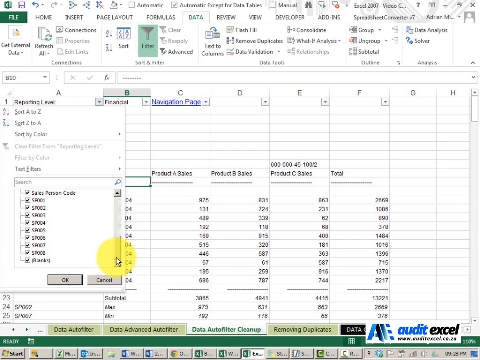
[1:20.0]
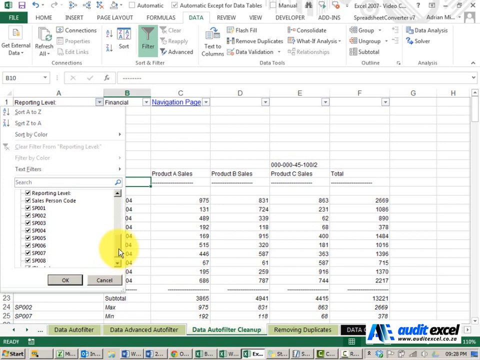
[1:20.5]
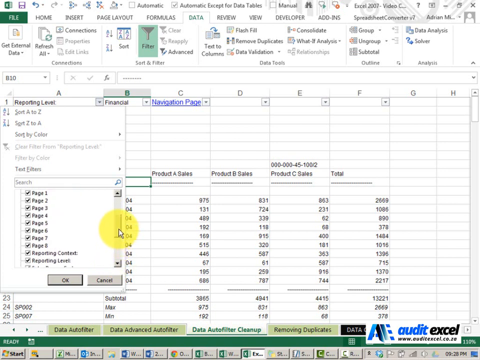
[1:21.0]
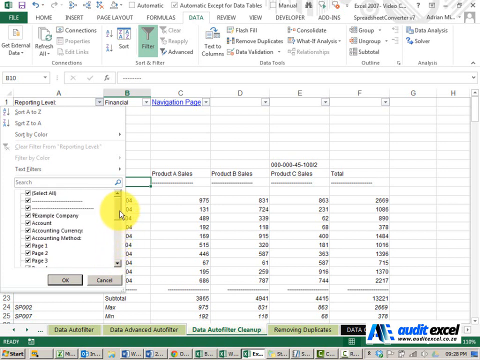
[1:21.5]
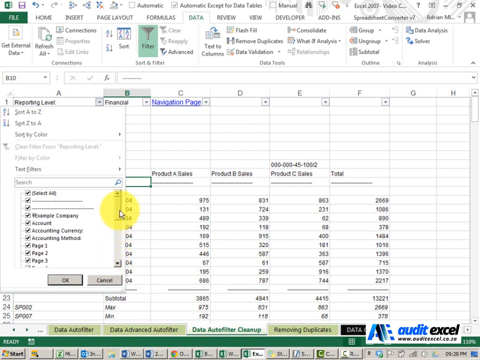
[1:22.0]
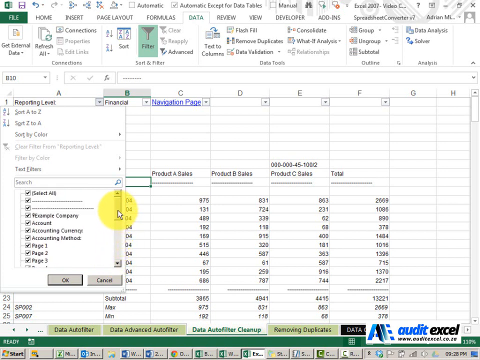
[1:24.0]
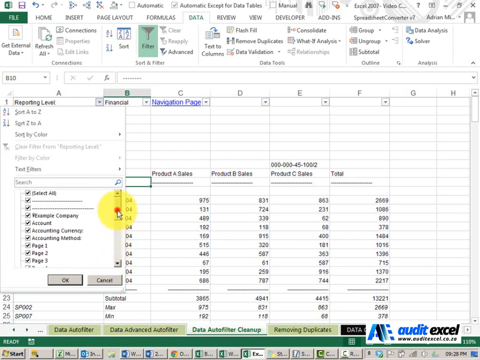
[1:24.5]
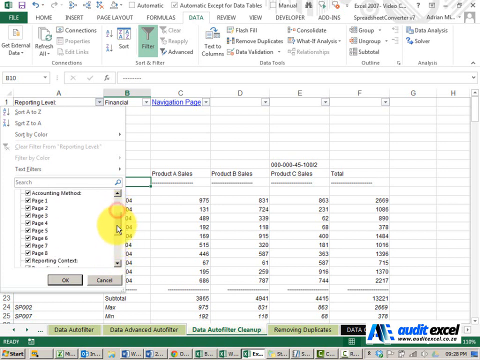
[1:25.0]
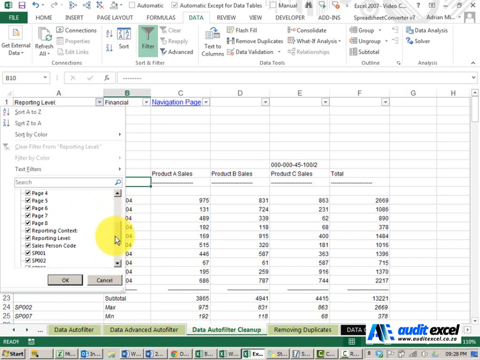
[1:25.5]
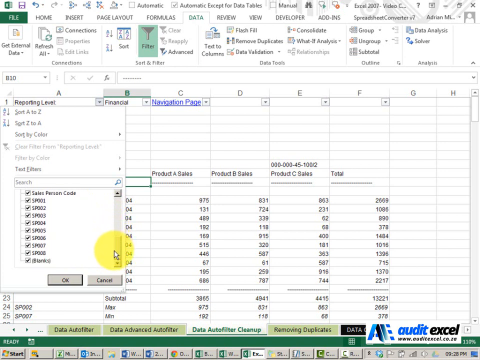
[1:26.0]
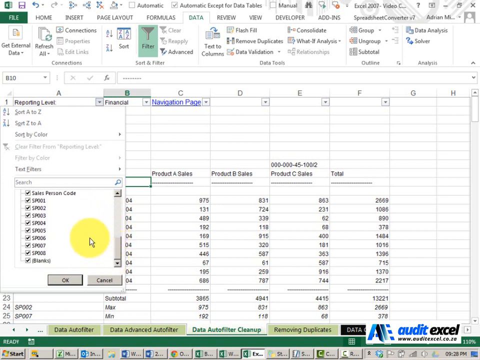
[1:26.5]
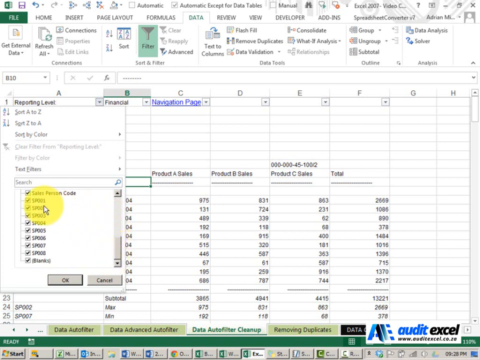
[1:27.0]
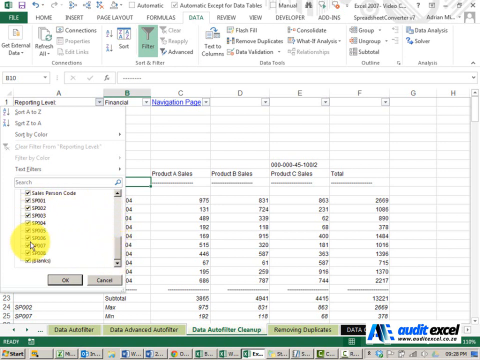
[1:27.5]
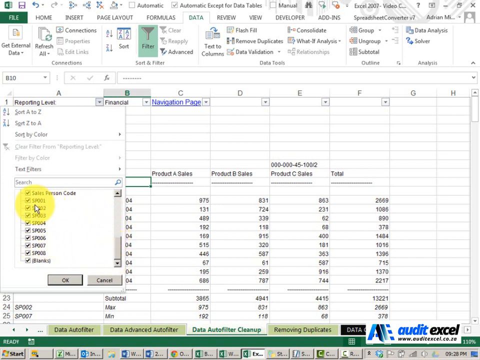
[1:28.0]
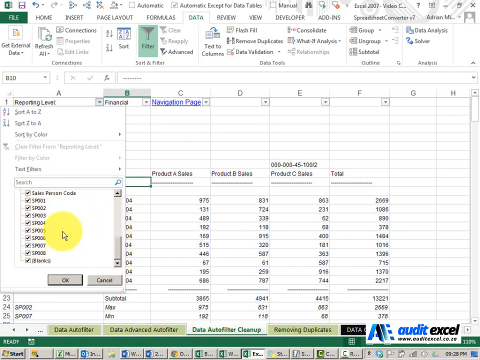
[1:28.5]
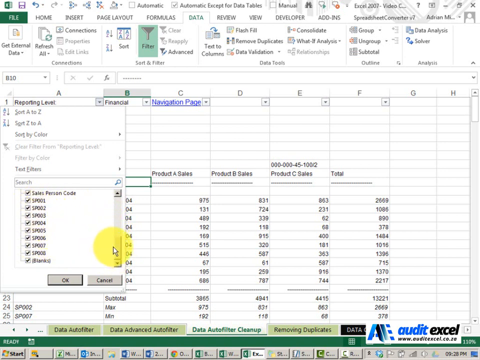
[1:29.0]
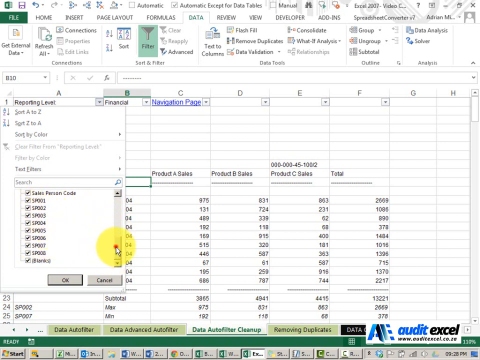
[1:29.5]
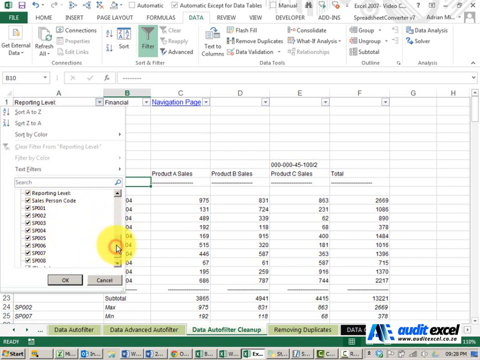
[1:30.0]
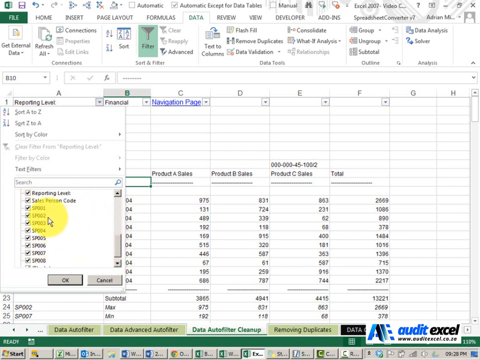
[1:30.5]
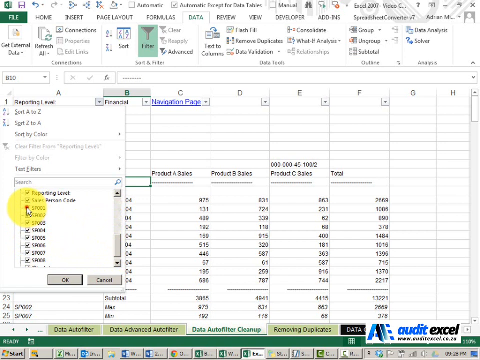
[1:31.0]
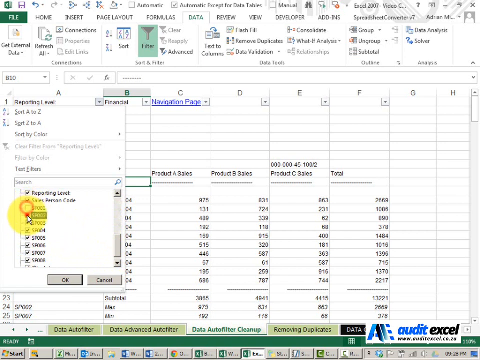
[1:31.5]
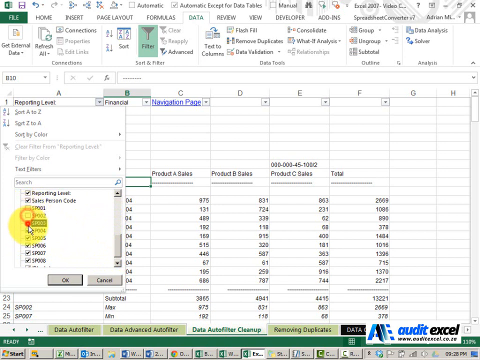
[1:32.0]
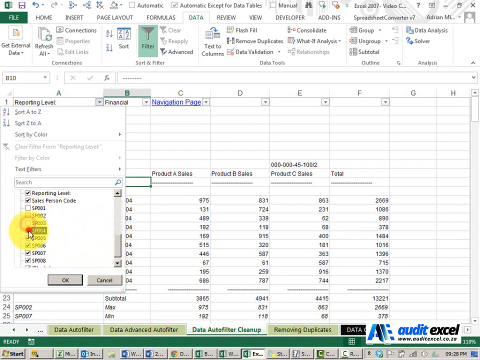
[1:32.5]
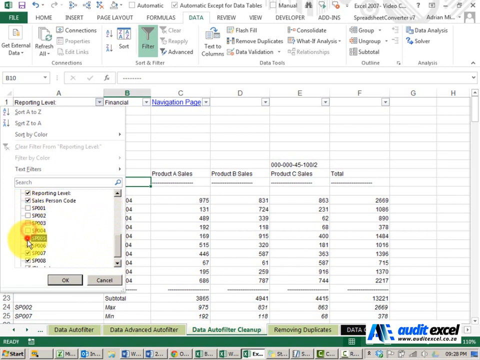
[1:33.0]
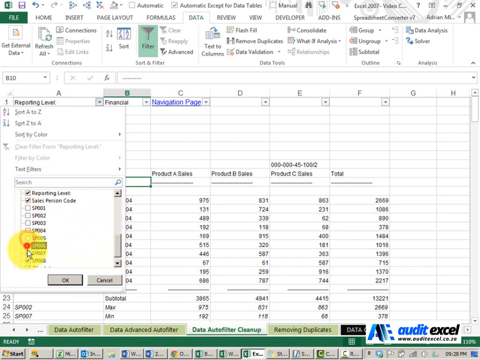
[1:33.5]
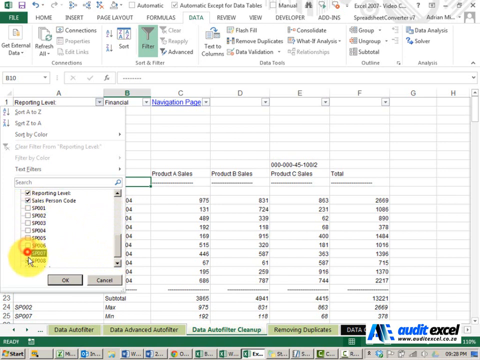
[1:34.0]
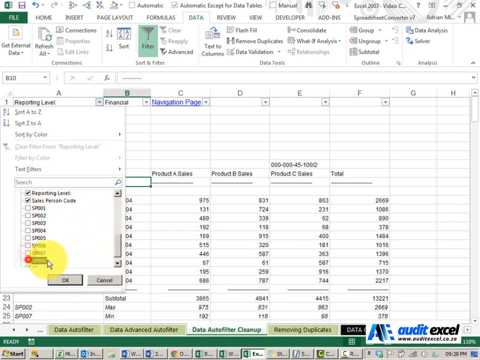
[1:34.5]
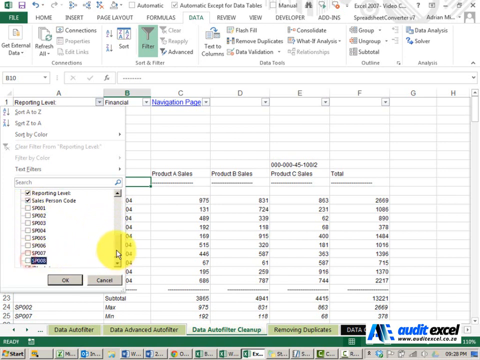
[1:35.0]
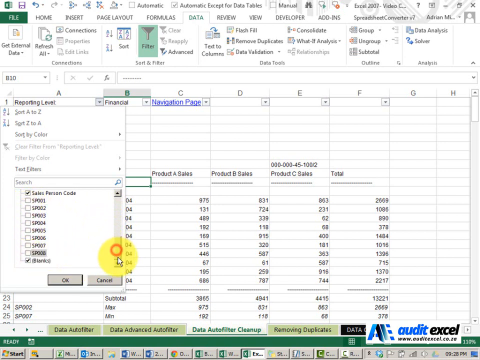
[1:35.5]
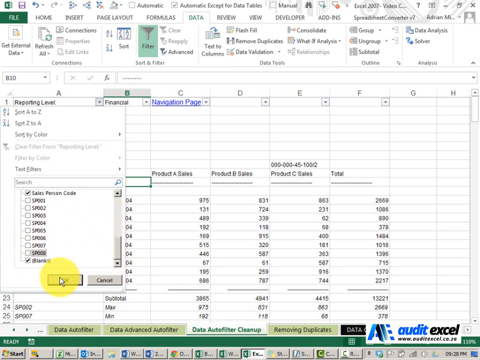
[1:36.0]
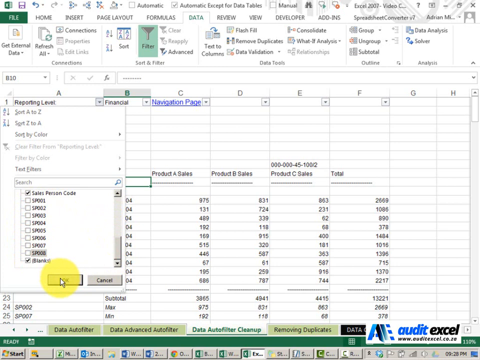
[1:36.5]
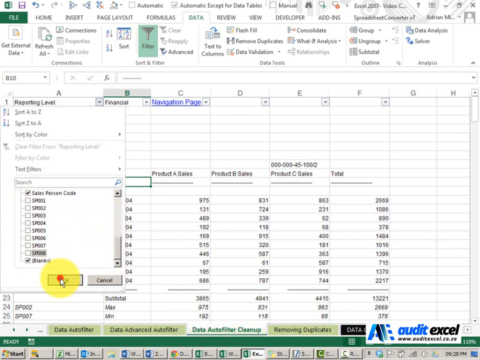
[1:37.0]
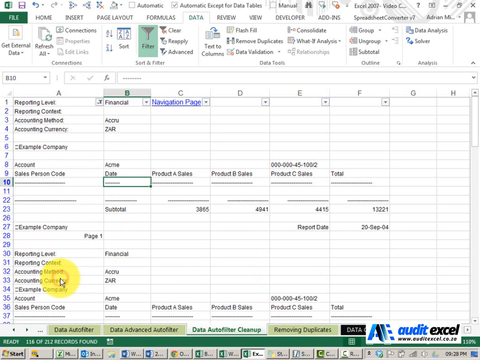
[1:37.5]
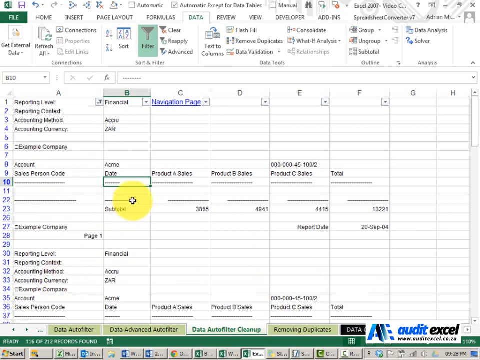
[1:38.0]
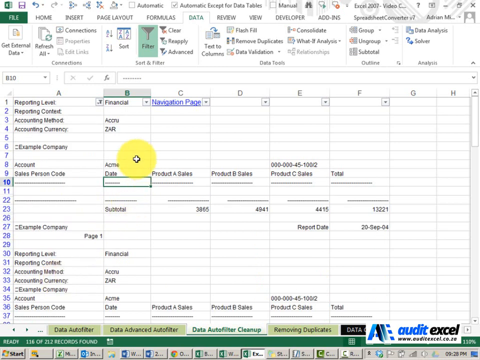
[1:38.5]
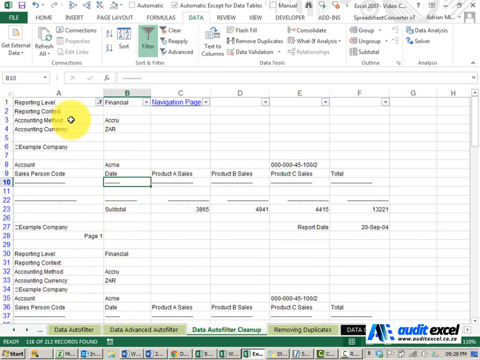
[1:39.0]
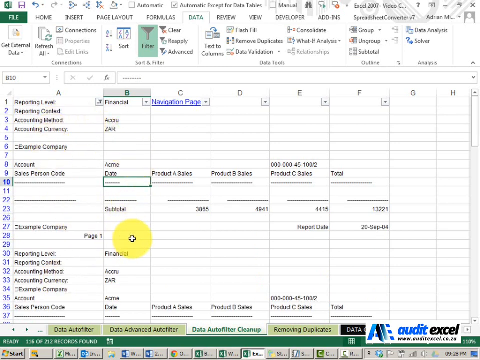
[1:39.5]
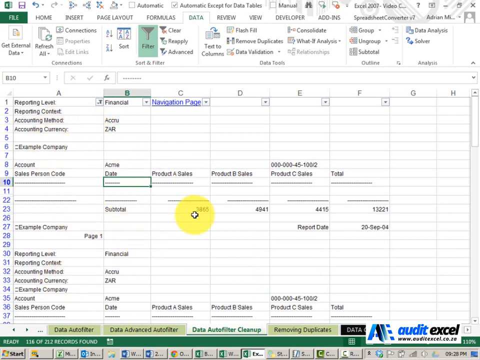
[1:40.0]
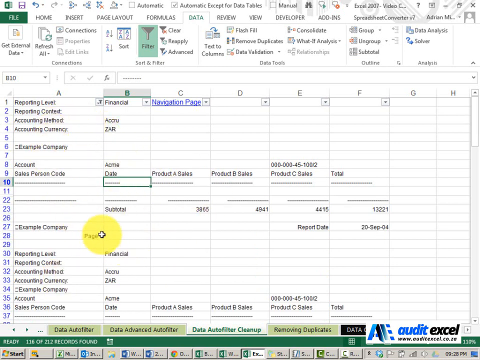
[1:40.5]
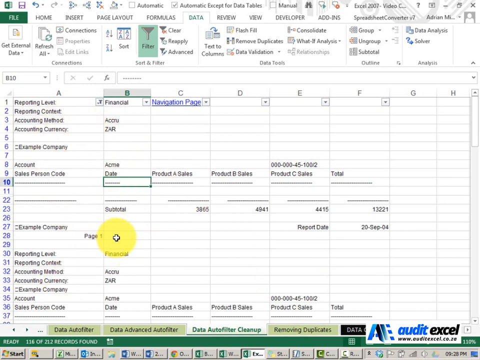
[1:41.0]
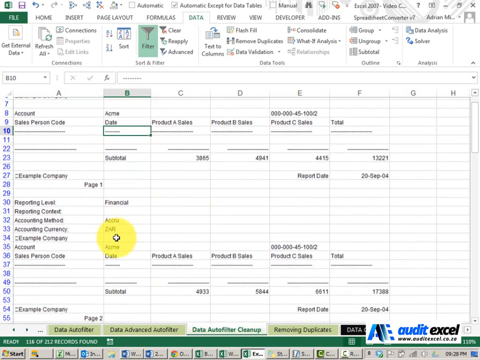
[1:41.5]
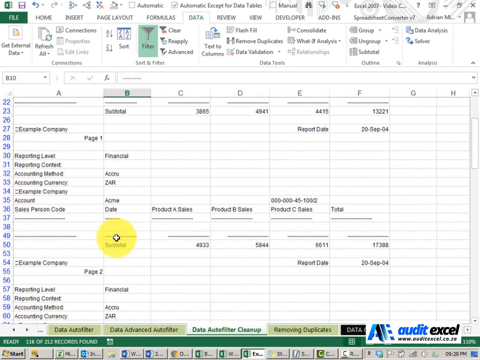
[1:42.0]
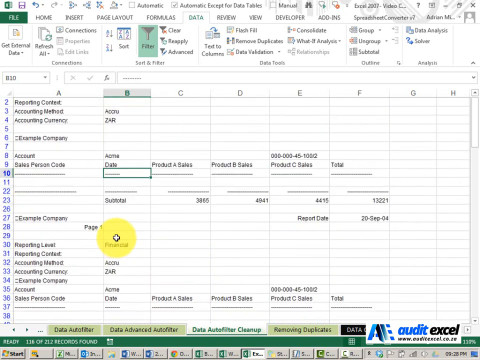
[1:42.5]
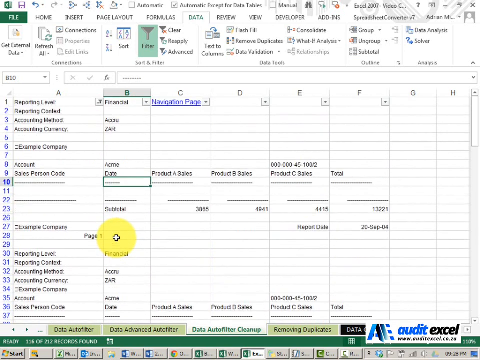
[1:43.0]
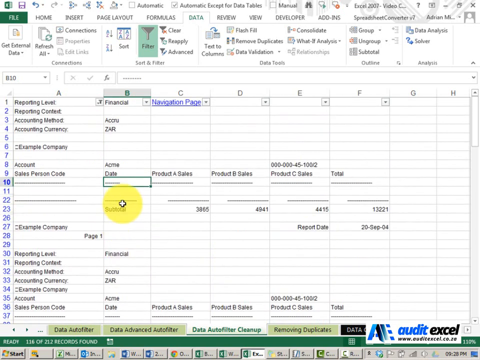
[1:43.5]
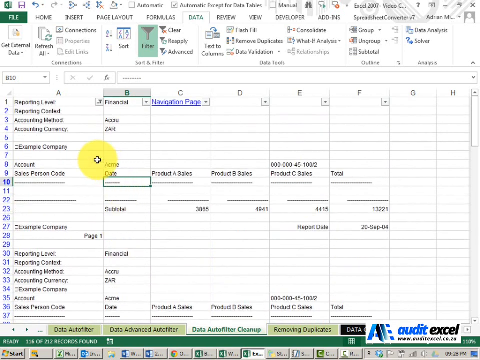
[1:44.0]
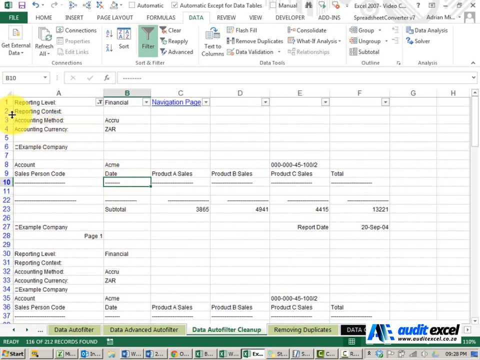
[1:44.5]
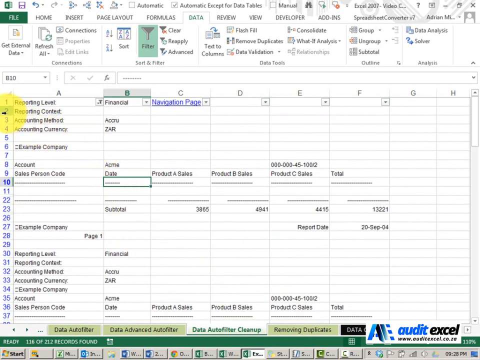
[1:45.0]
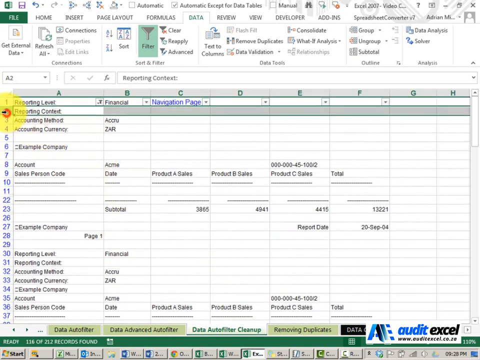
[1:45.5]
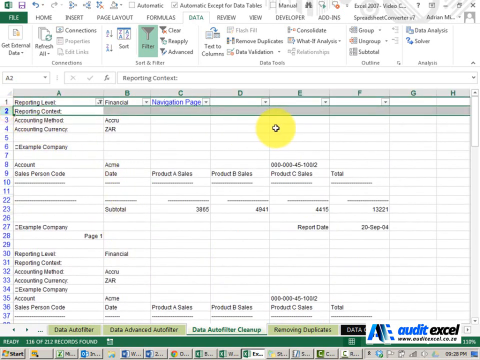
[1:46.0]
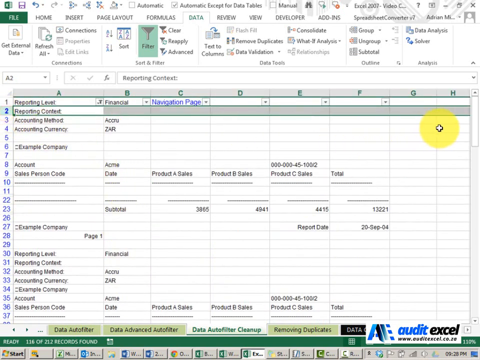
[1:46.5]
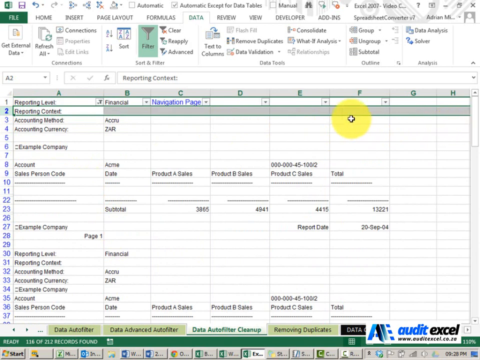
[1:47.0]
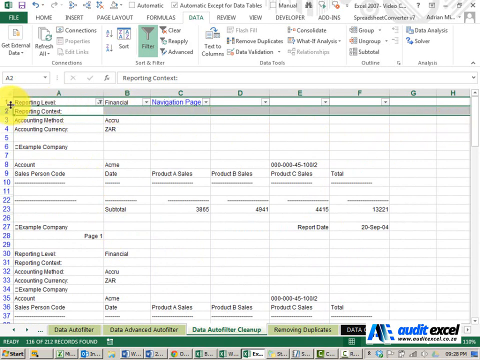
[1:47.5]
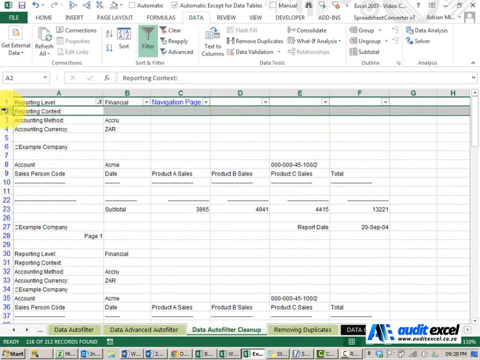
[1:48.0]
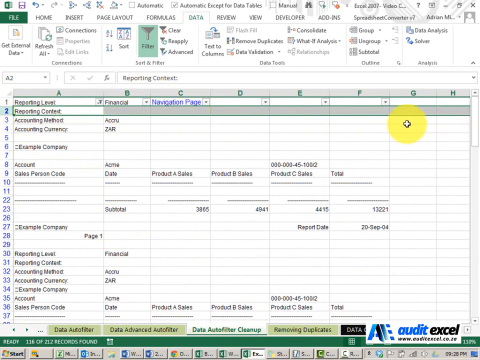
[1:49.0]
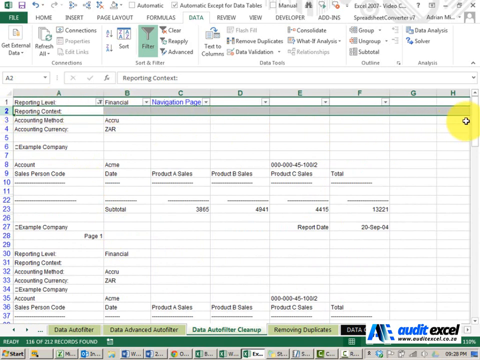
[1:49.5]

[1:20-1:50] The reporting level dropdown in the column is open with a bunch of data selected. All of the individual salespeople are deselected, so they no longer show on the spreadsheet. Reporting content is then highlighted. The filtering apparently sets up a more general audit rather than one of the individual salespeople, seemingly for products A, B and C.